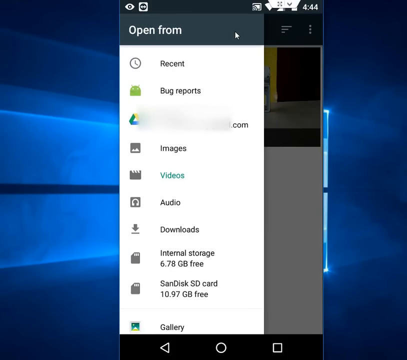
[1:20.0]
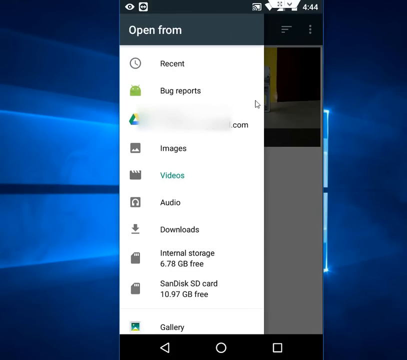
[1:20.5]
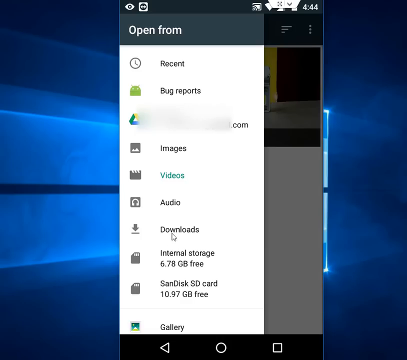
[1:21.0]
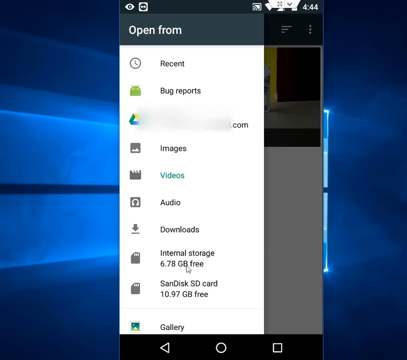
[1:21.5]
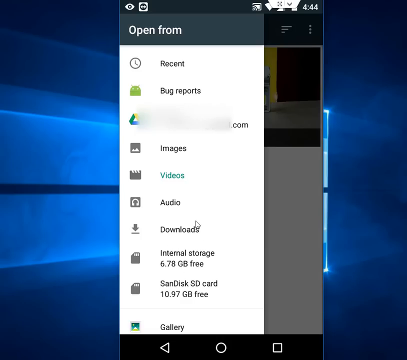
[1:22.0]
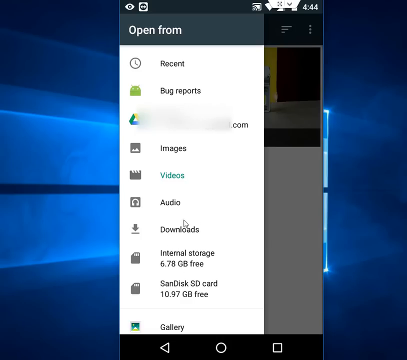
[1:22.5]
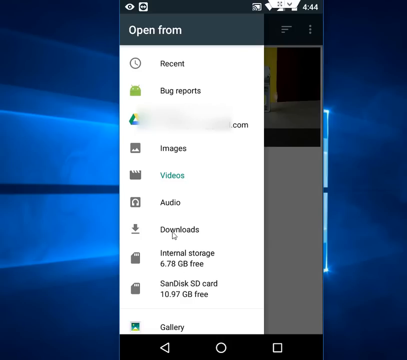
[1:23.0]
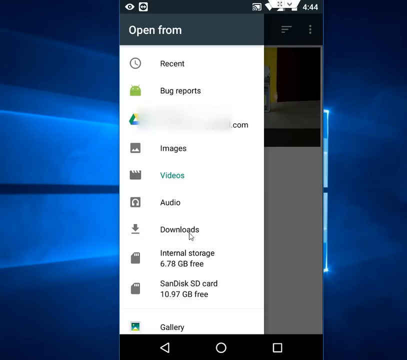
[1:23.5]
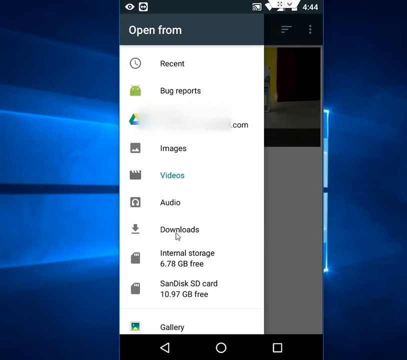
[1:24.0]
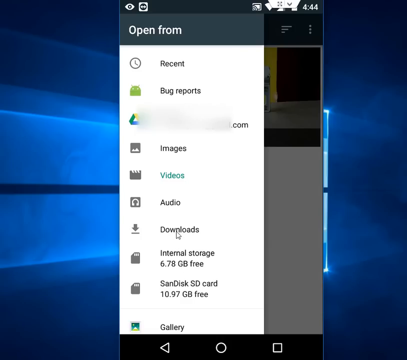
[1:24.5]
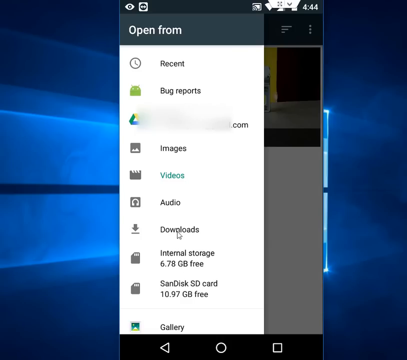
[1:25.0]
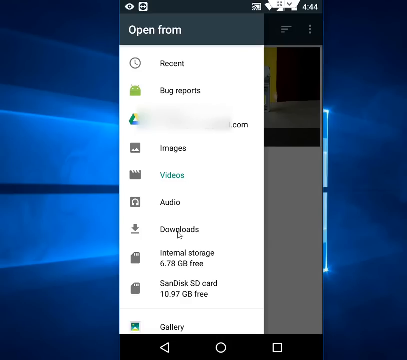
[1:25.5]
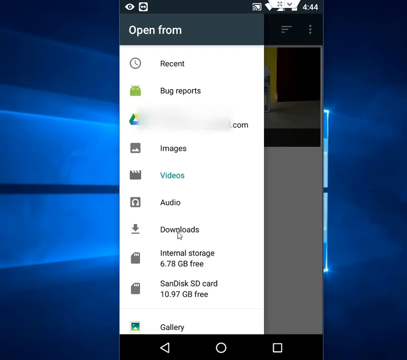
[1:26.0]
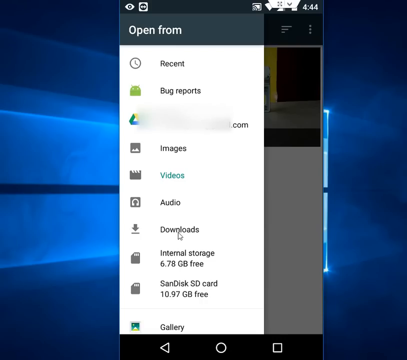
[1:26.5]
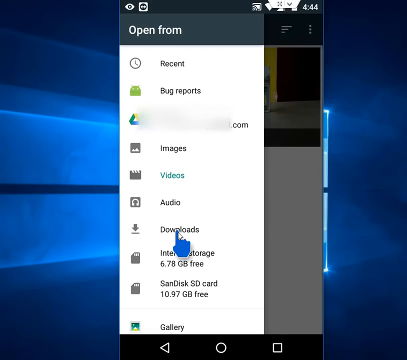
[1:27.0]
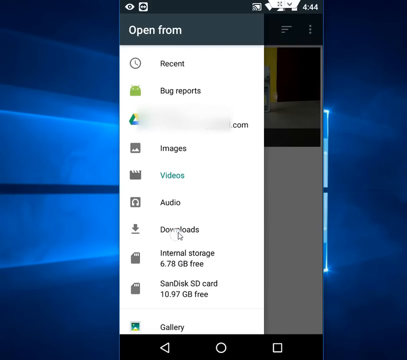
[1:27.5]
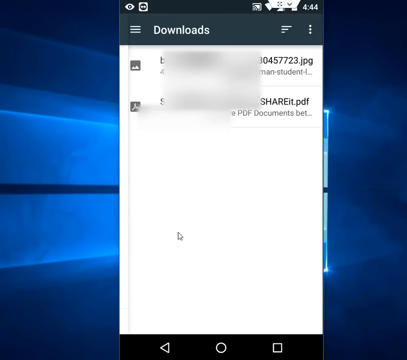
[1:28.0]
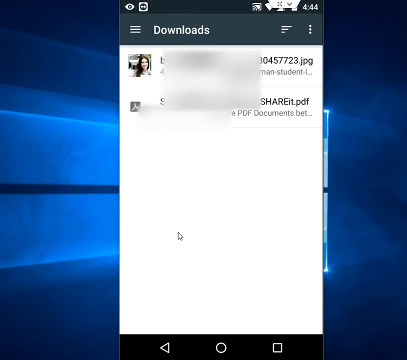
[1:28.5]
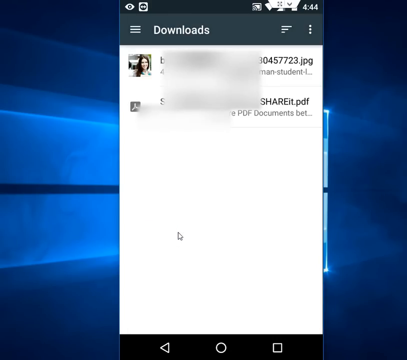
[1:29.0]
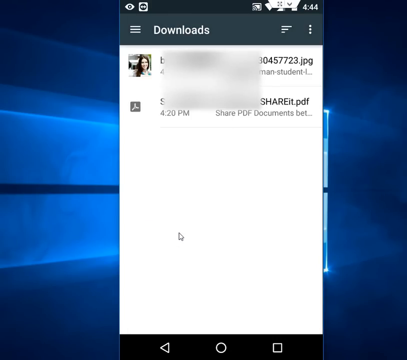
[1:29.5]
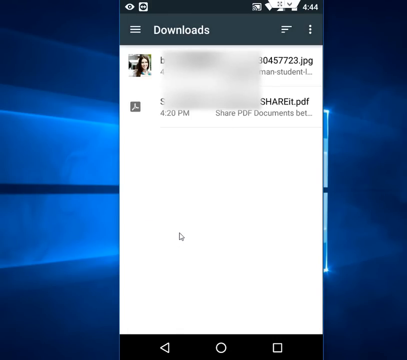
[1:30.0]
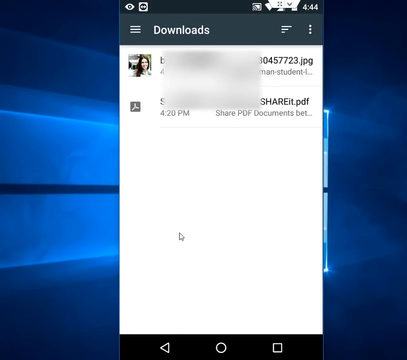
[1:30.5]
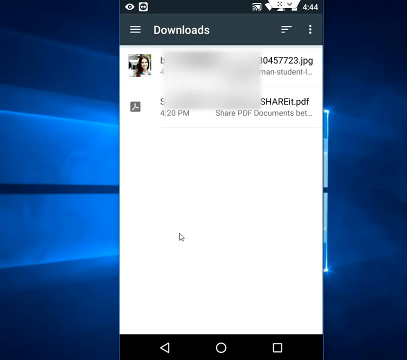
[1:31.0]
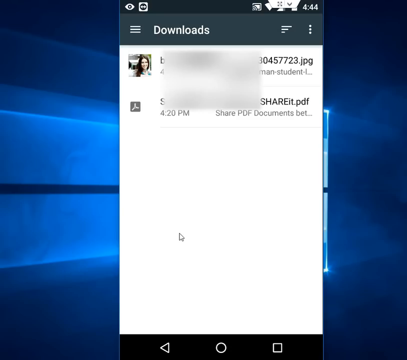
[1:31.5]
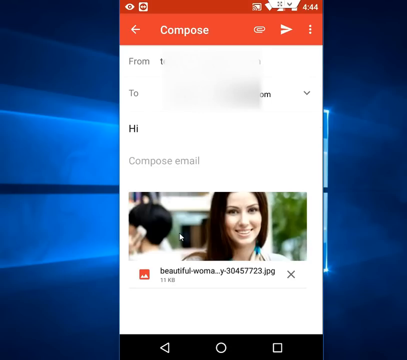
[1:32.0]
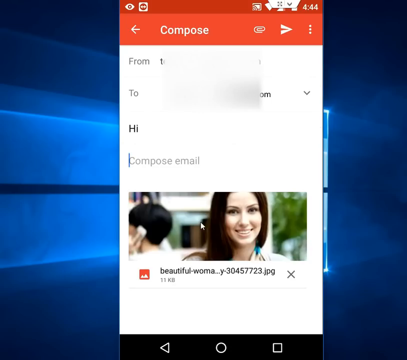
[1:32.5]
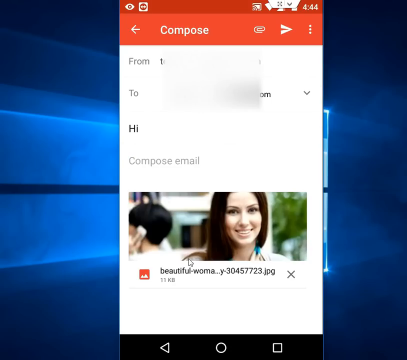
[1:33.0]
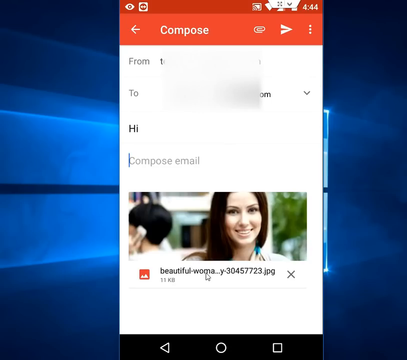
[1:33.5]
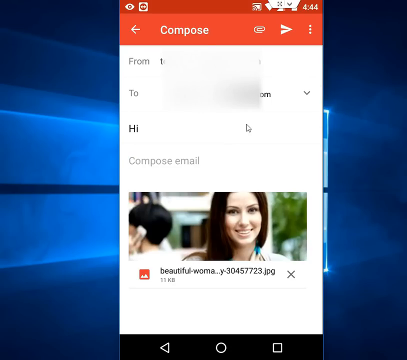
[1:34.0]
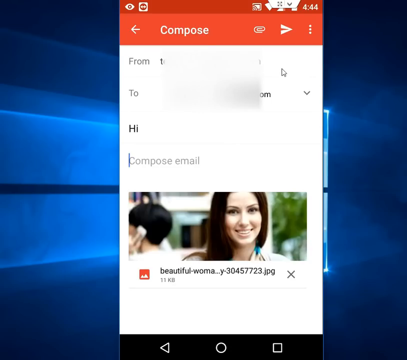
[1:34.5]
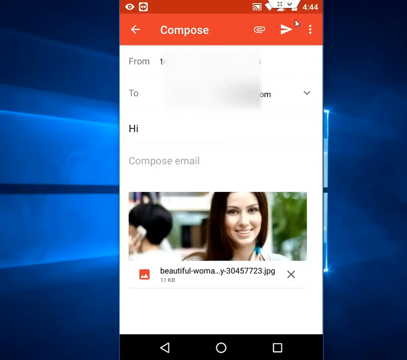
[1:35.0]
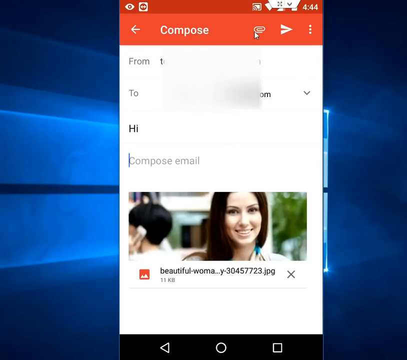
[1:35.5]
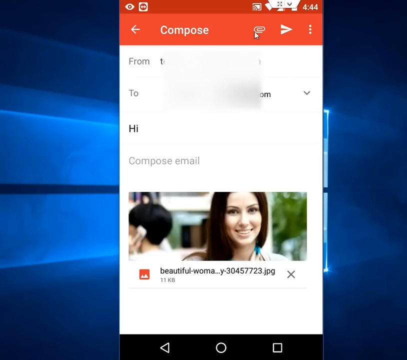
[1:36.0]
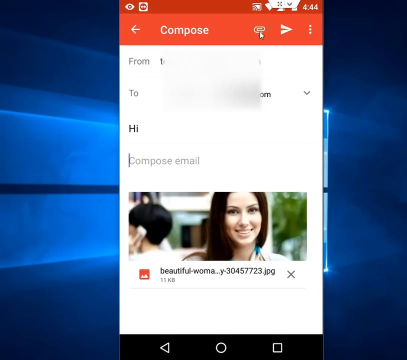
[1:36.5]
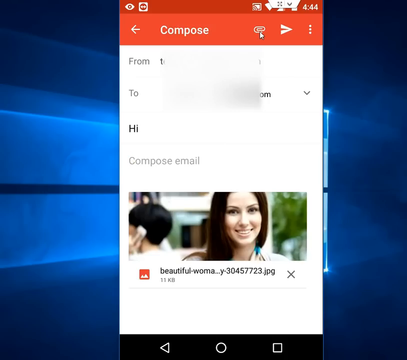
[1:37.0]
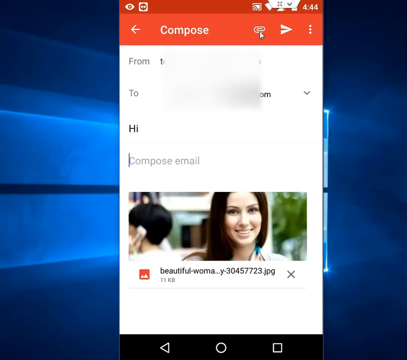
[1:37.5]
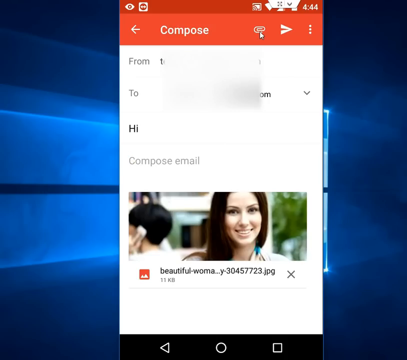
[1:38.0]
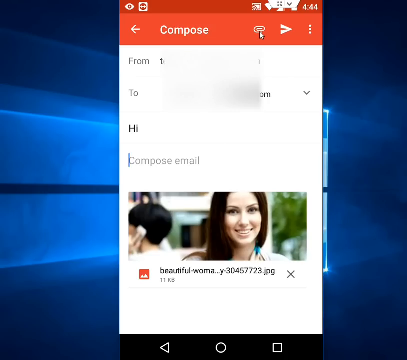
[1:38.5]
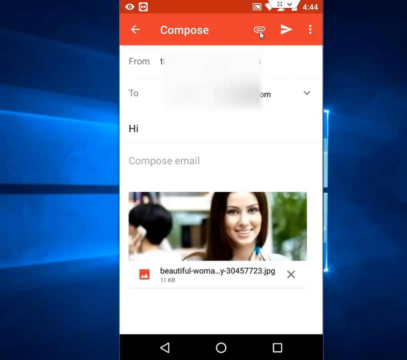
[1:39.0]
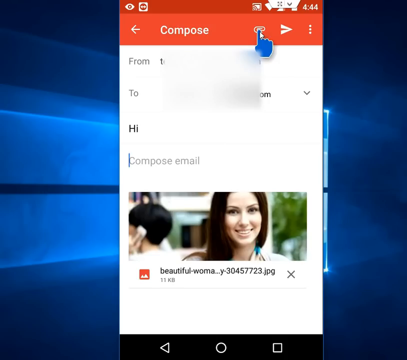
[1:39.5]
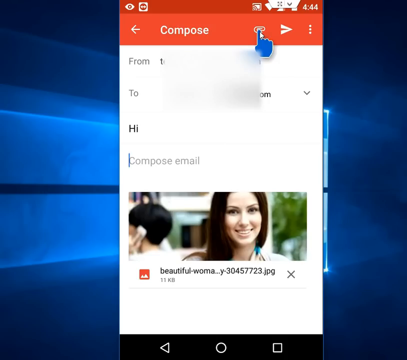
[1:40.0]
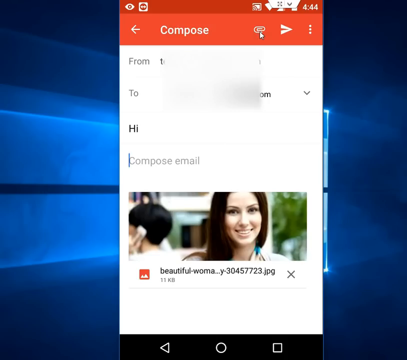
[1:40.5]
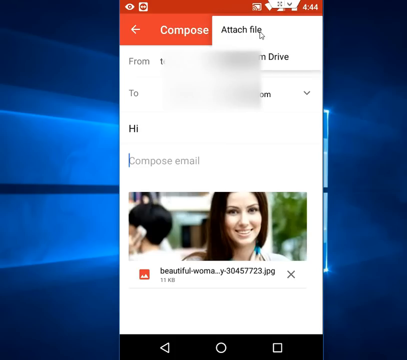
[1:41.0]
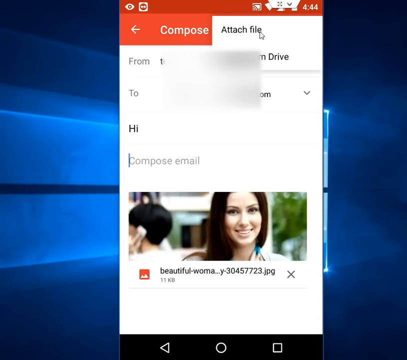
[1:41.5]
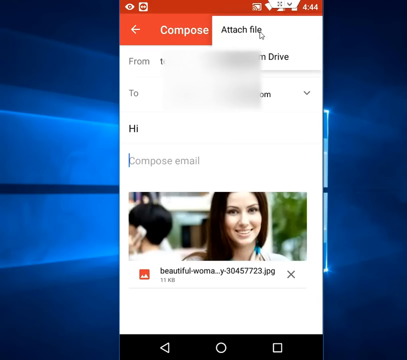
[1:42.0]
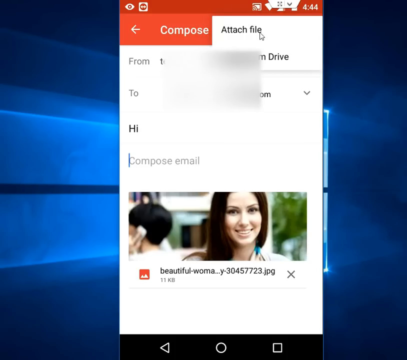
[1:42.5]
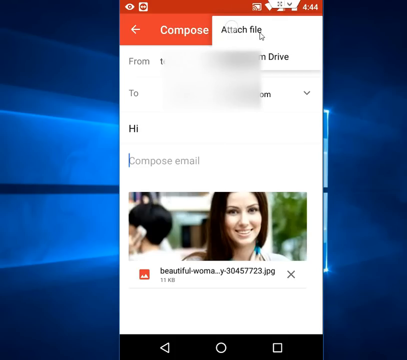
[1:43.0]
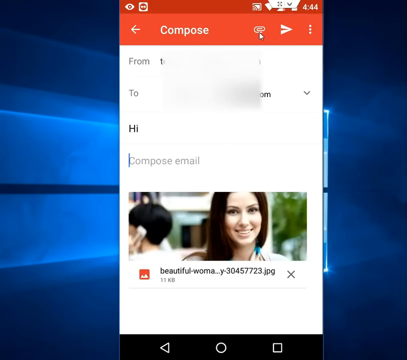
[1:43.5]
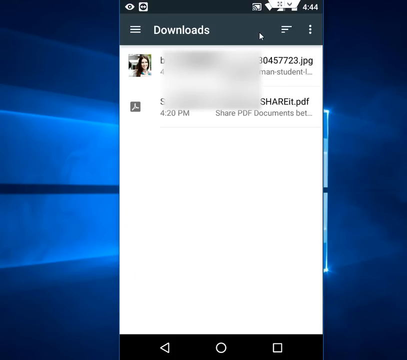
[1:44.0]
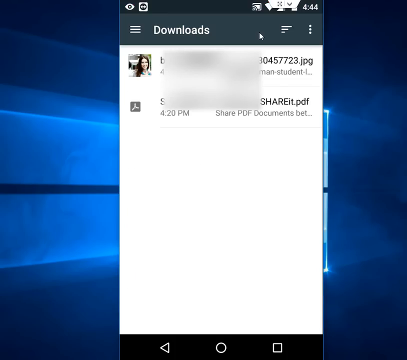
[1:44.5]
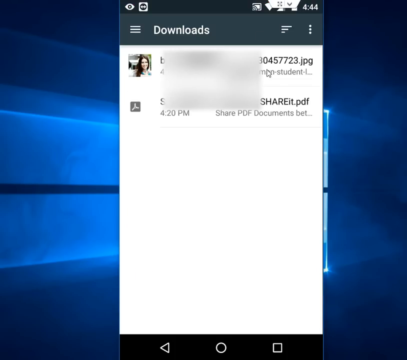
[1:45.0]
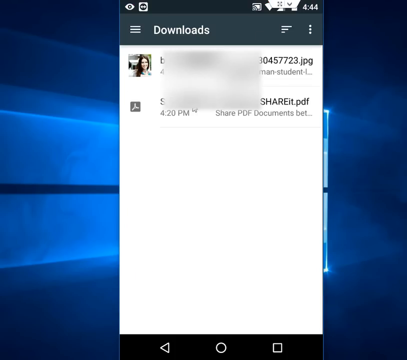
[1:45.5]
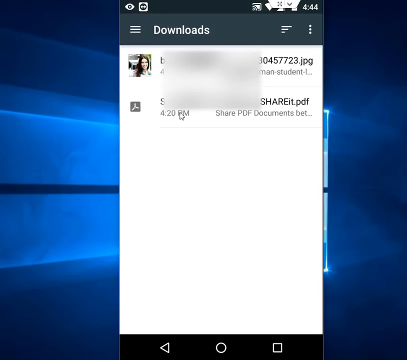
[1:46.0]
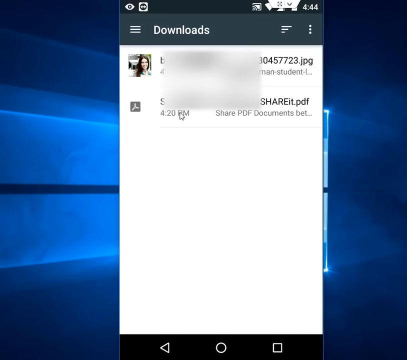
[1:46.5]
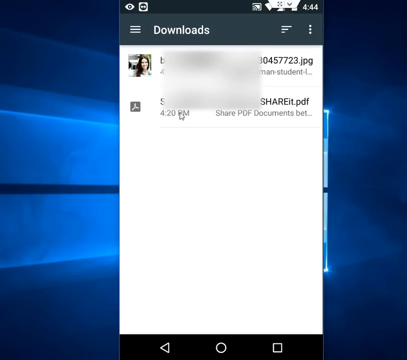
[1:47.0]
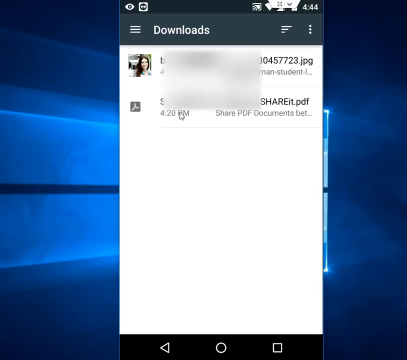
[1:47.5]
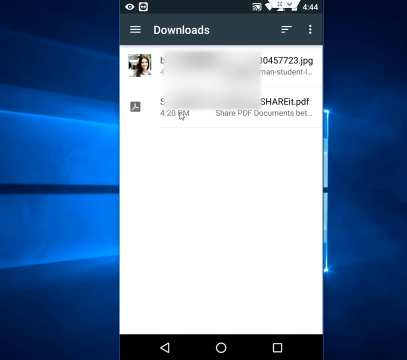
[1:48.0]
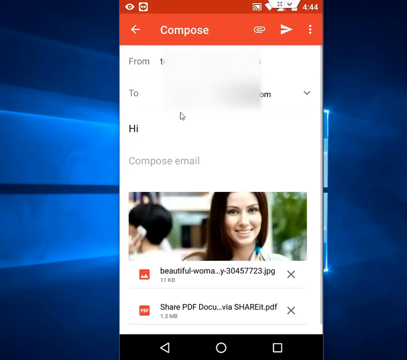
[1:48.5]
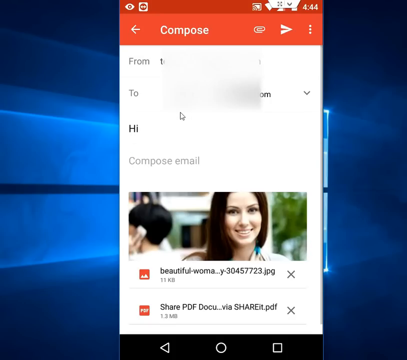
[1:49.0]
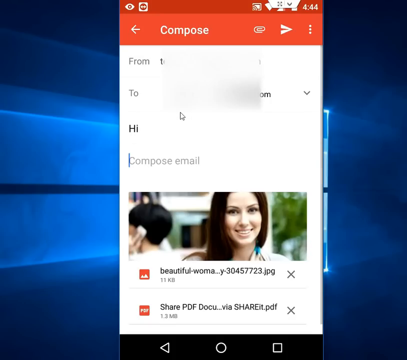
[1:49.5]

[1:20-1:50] Another screen on the phone reads "open from" with the word "recent". The view flips to a screen where names have been blurred out. A woman pops up on the right side of a picture shown on the phone; it looks as if the picture is being sent to someone. The screen shows "to" and then the letter T. The "open from" list shows "recent", "bug report", a blurred-out ".com" entry, "images" and "videos", with videos highlighted in green, plus "audio" and "downloads". "Internal storage" shows 6.78 gigabytes free and "SD card" shows 10.97 gigabytes free. To the left of "recent" is a circle that looks like a clock with no numbers. Beside "bug report" is a little green character with green ears and white eyes. Below is the drive symbol, then "images" with a gray square box containing some white, and "videos" in green with a square box that is gray at the bottom and white at the top, moving as if opening and shutting.